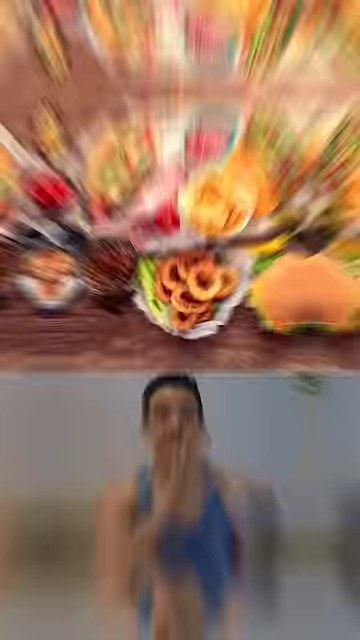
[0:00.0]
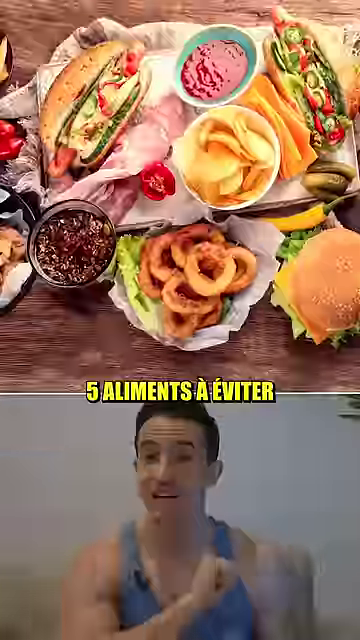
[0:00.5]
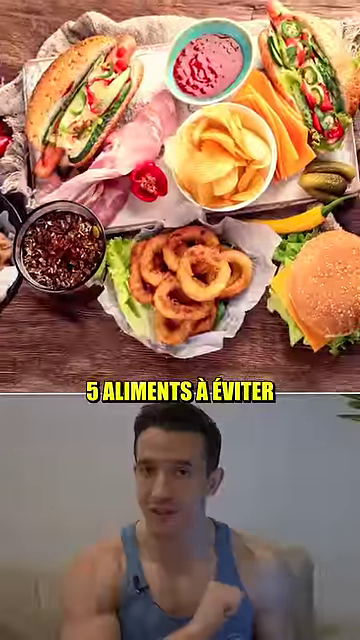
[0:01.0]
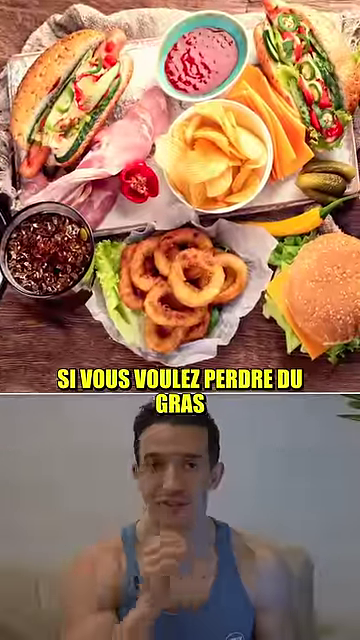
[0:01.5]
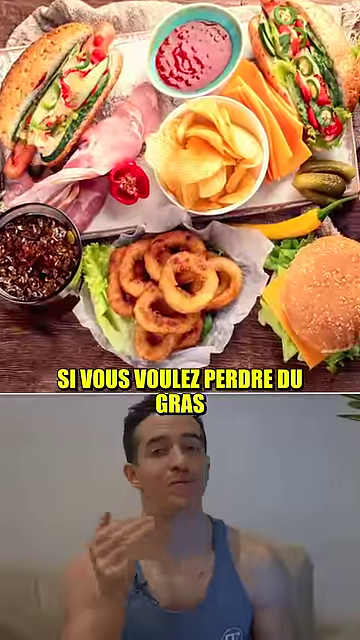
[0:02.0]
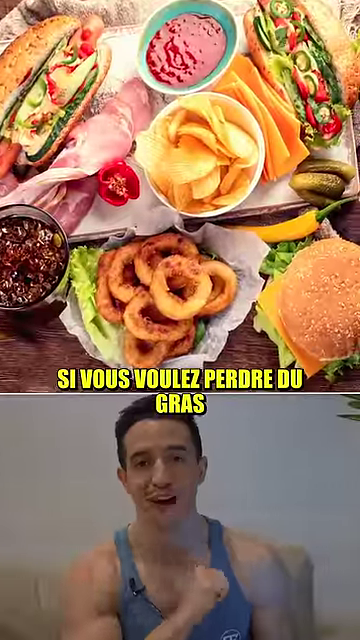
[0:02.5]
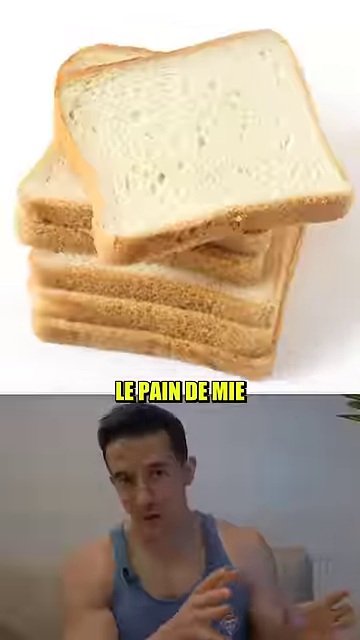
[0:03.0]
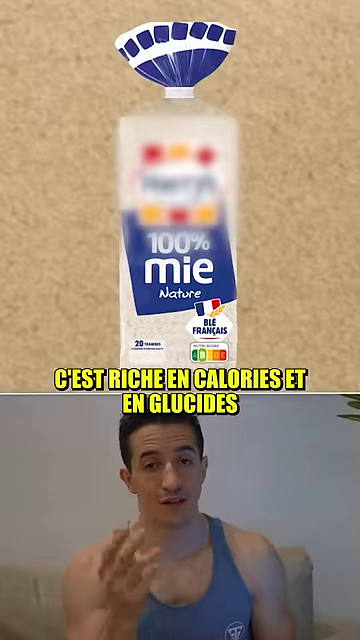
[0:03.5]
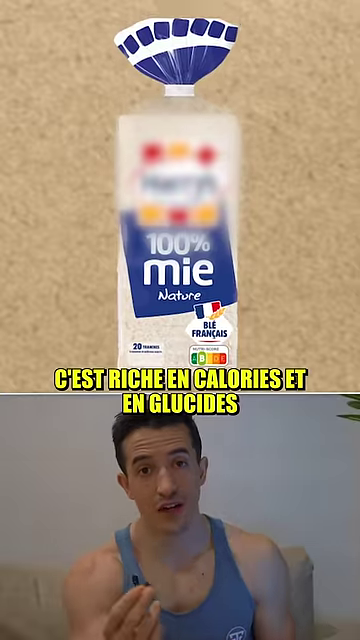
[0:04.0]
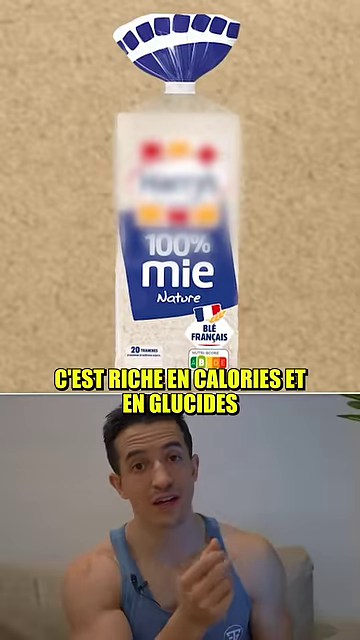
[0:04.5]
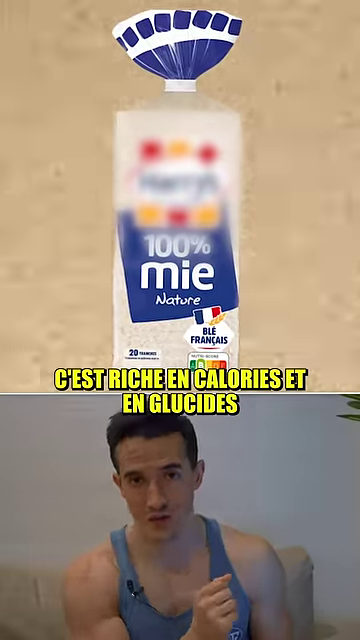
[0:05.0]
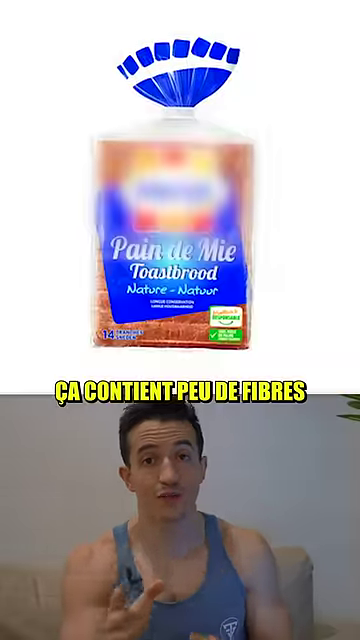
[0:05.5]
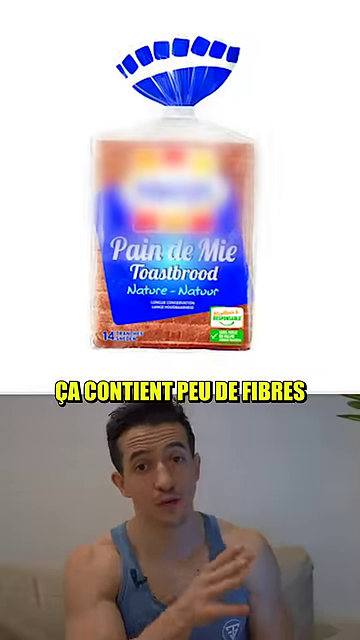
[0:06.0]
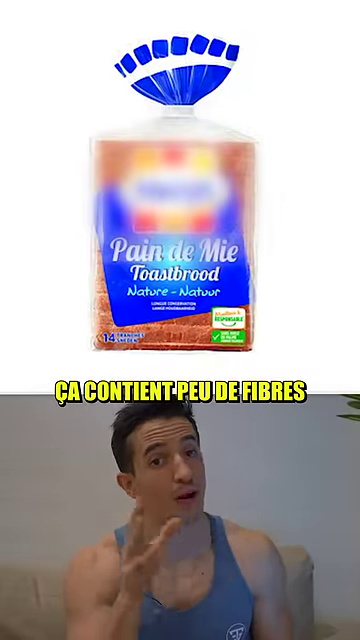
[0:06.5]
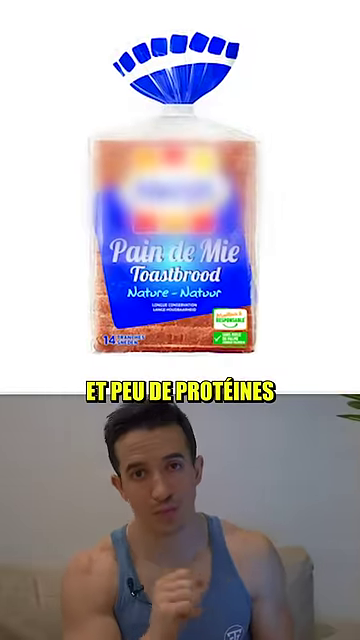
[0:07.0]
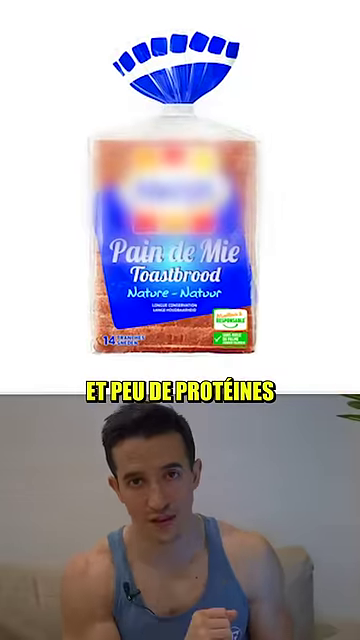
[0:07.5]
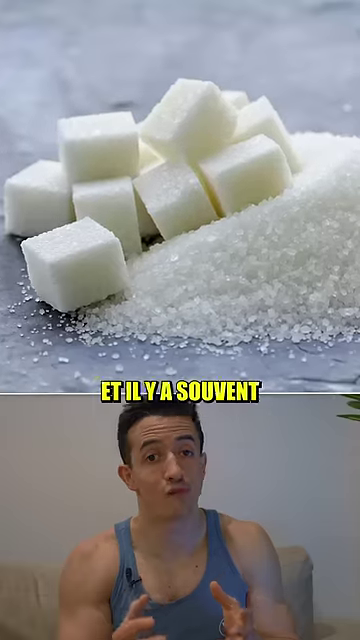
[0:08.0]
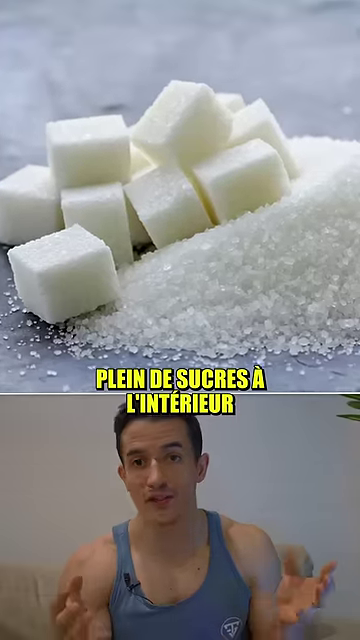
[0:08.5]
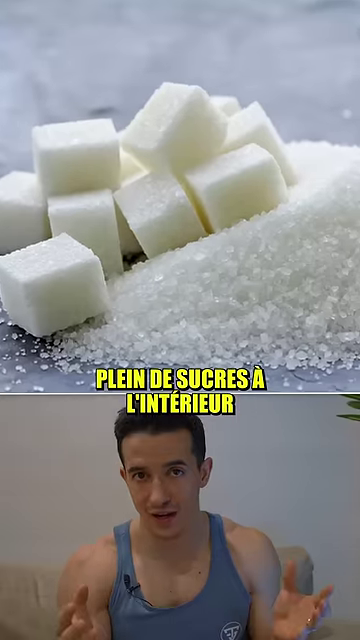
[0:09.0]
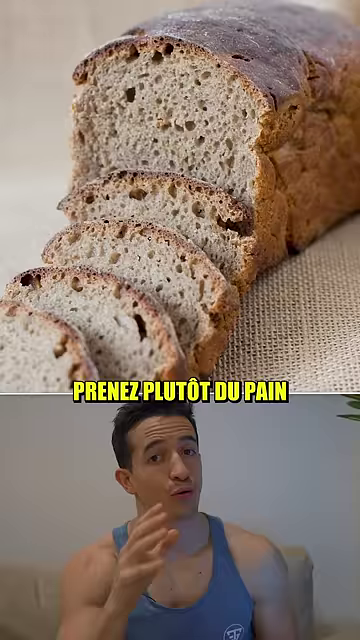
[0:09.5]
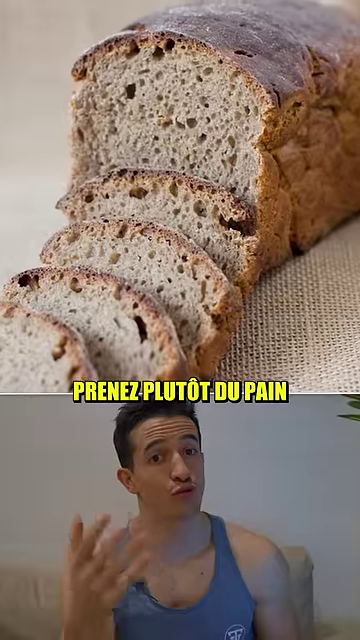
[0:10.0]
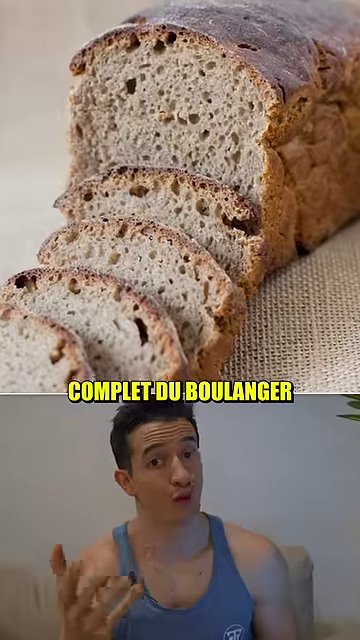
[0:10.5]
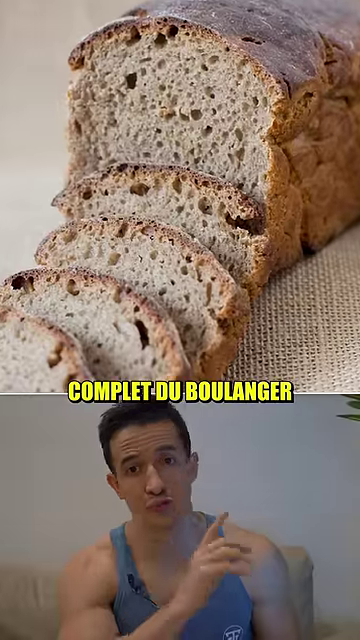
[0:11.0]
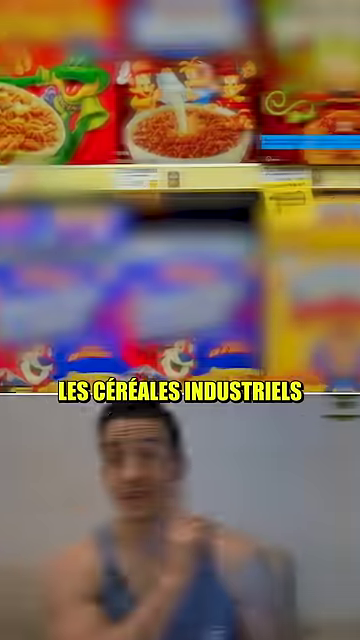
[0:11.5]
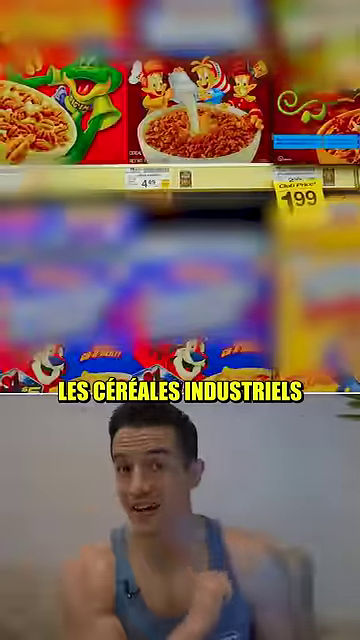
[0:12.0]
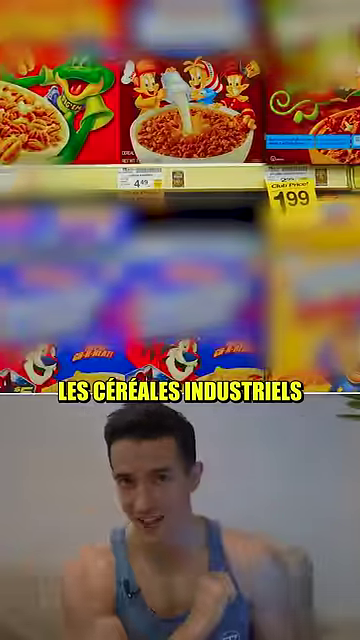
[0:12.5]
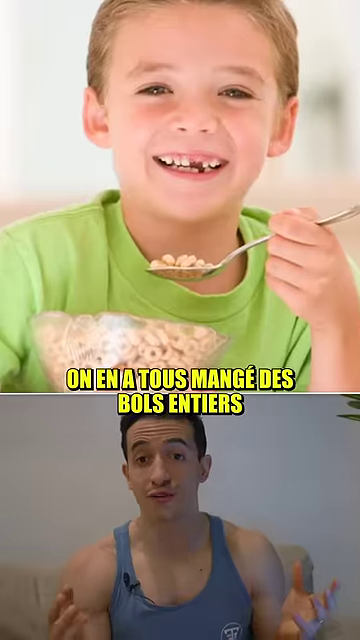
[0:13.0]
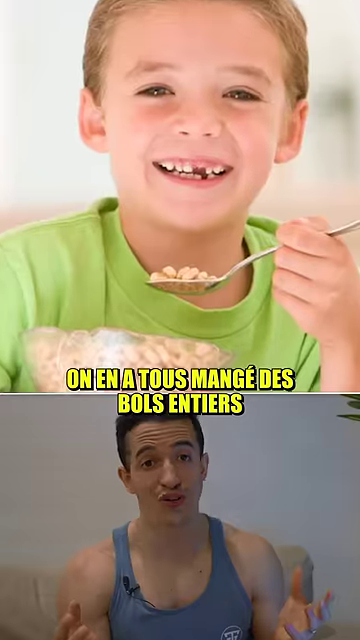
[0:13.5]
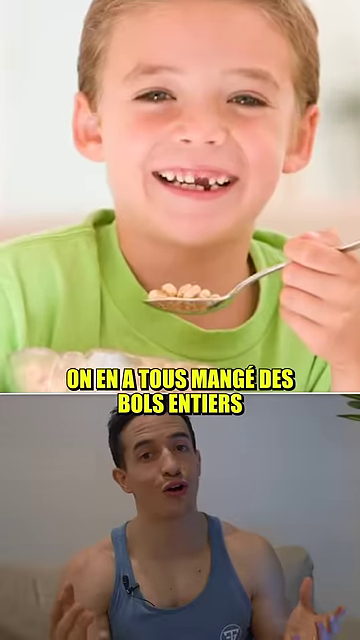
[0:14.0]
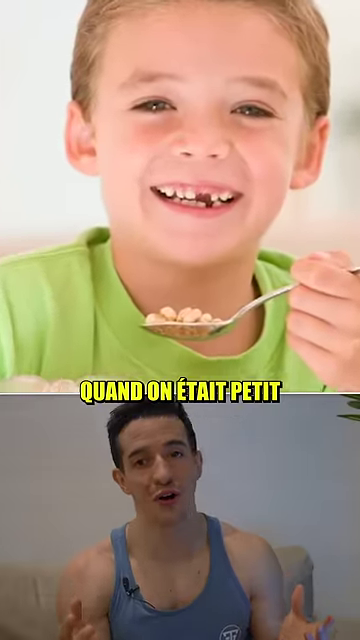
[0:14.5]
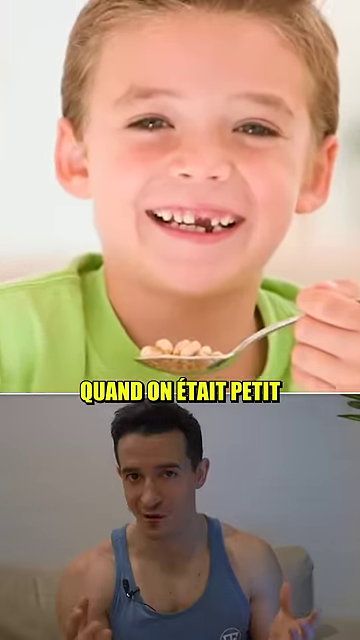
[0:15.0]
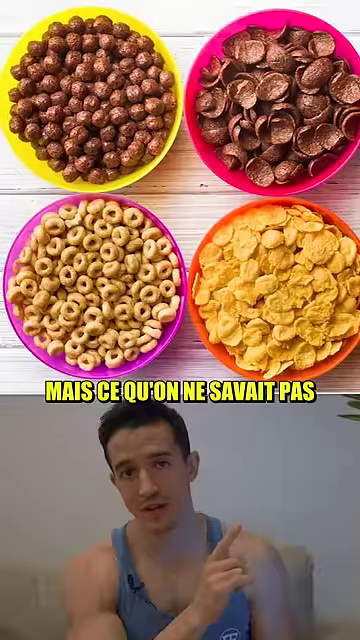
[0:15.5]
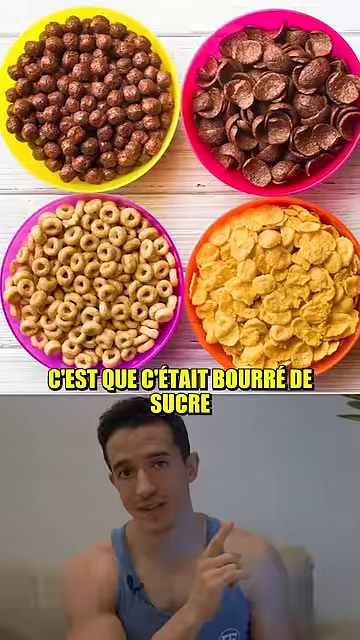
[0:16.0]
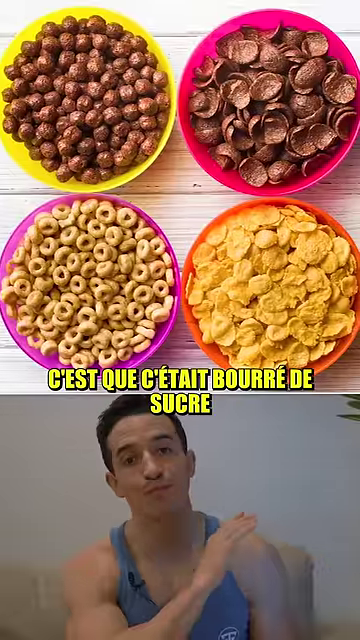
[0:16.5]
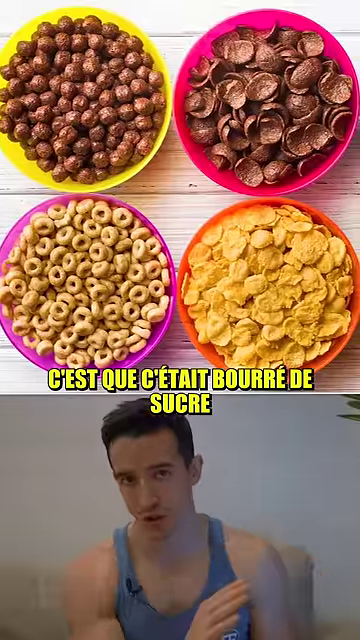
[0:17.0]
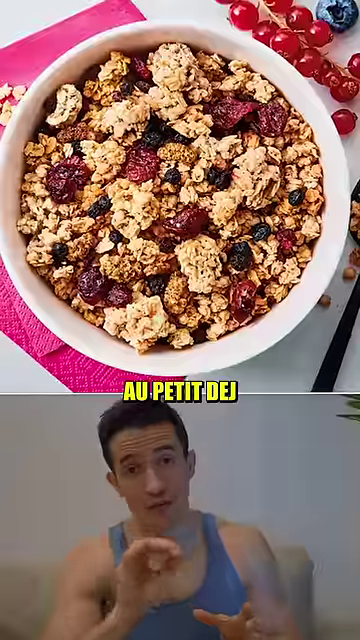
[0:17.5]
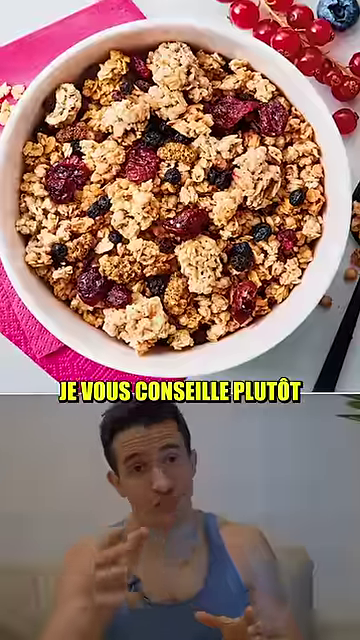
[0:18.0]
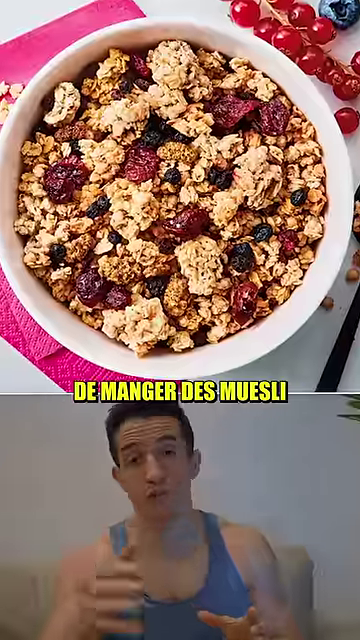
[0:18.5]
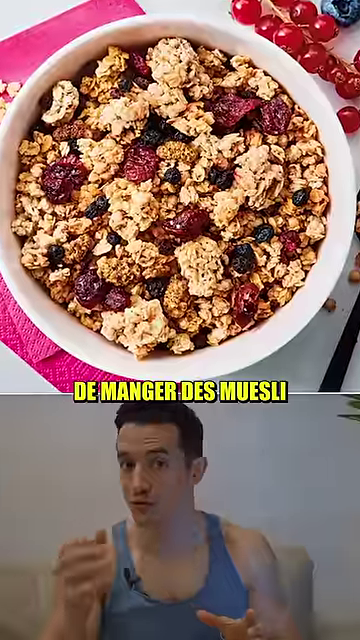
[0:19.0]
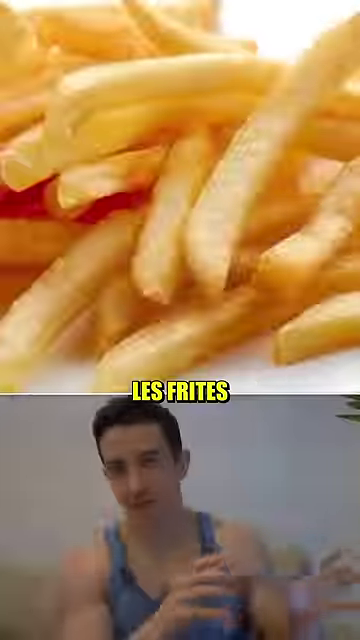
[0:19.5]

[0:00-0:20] A very fit young man with brown hair, wearing a blue tank top, is in the bottom half of a split screen. The top half shows a lot of fatty foods, including onion rings, a burger, another hoagie-like sandwich and chips. Over the line between the two segments is the number 5 and the text "ALIMENTS A EVITER". The next screen shows the same man at the bottom and several slices of white bread above him, with "LE PAIN DE MIE" in between. The man is still talking at the bottom as the top changes to a product, apparently a packet, labeled "100% MIE", with yellow text superimposed over it: "CEST RICHE EN CALORIES ET EN GLUCIDES". The man seems to be describing the product. The product is replaced by a bag of what appears to be a light-colored bread, with text that appears to read "CA CONTIENT PEU DE FIBRES". Sugar cubes follow, with the words "PLEIN DE CUCRES A L INTERIEUR". A darker, sliced loaf of bread with big holes in it appears above, with the text "COMPLET DU BOULANGER". Another product, which looks like sugary cereal, is shown with Tony the Tiger and the words "cereals industrials". A kid is shown eating cereal with the text "ON EN A TOUS MANGE DES BOLS ENTIERS". Four different bowls of cereal follow, including various sugary-type cereals in brightly colored bowls, with the text "CEST QE CETAIT BOURRE DE SUCRE" over the sweet cereals. The same man talks at the bottom the entire time, unchanged.